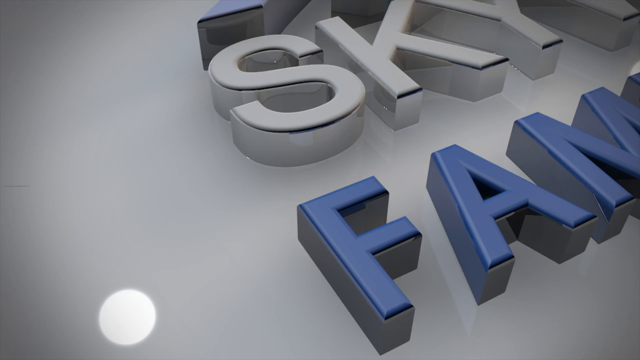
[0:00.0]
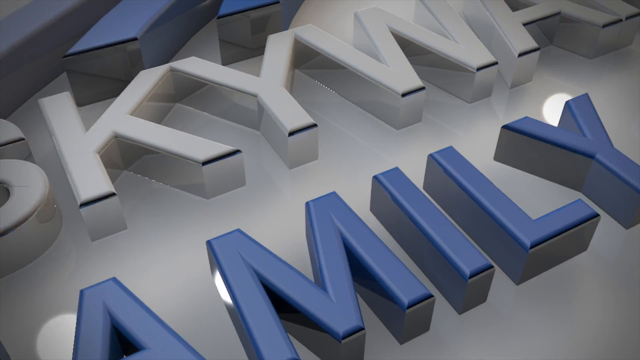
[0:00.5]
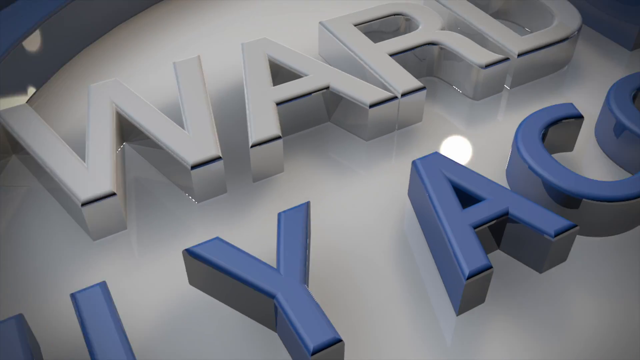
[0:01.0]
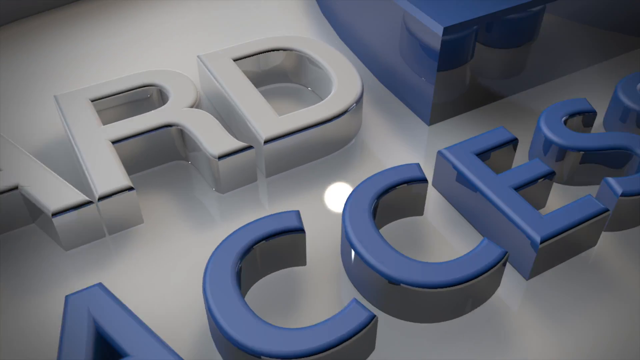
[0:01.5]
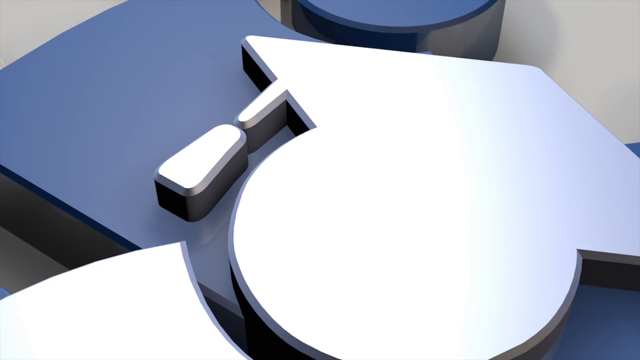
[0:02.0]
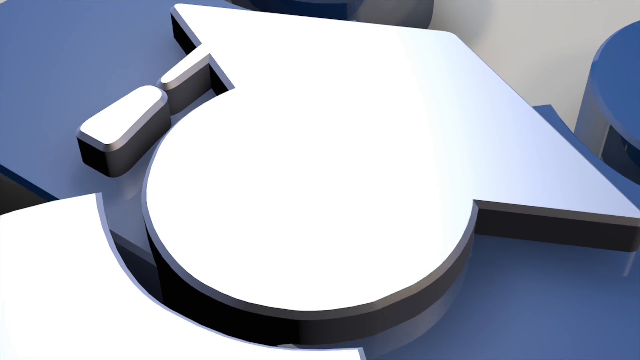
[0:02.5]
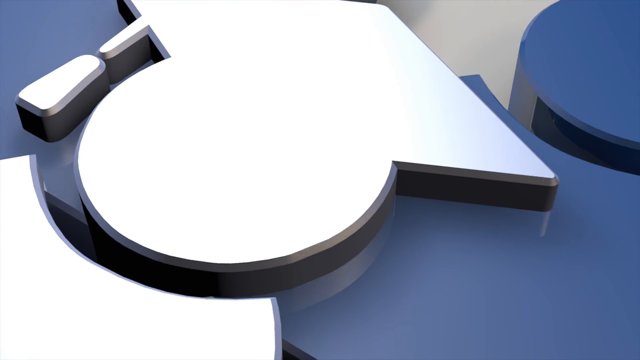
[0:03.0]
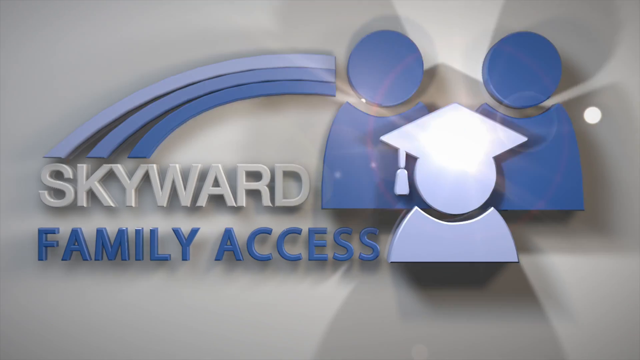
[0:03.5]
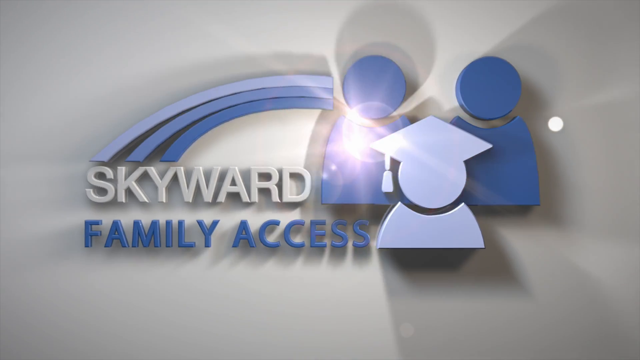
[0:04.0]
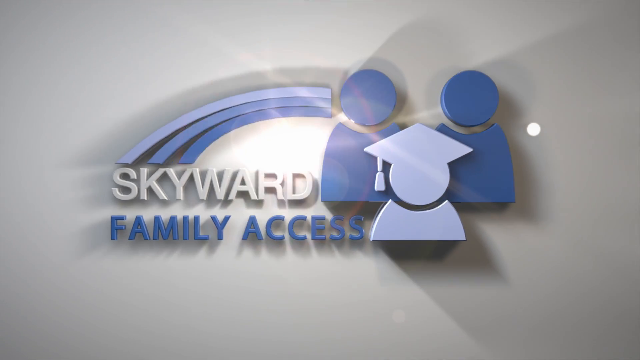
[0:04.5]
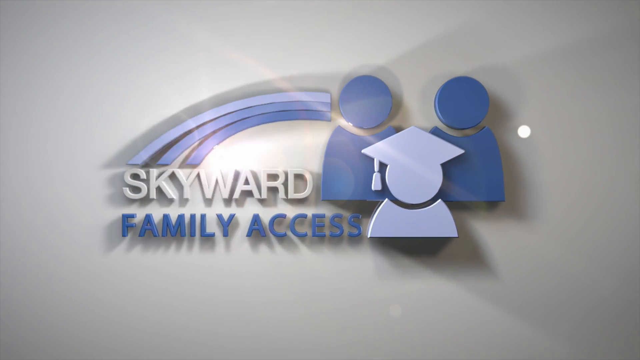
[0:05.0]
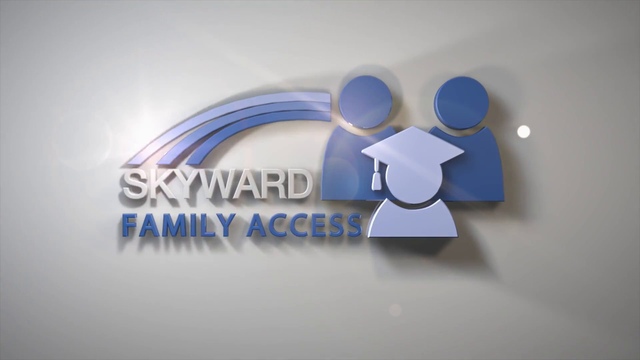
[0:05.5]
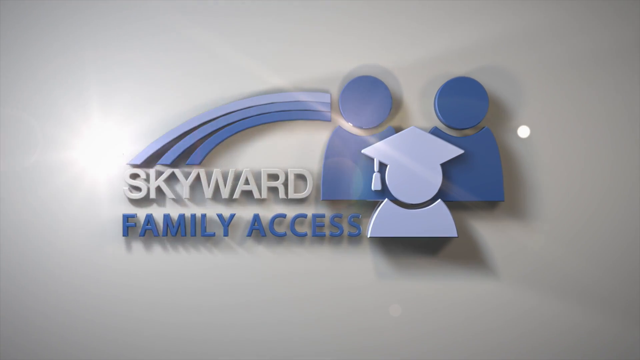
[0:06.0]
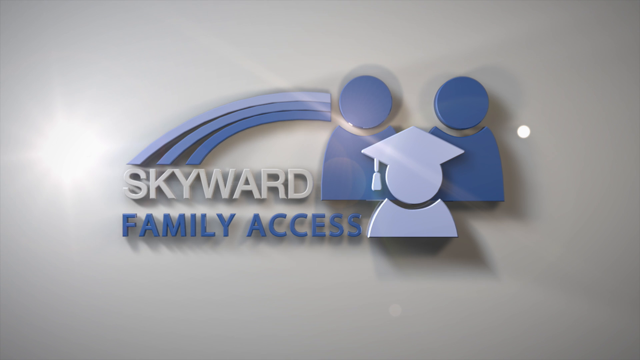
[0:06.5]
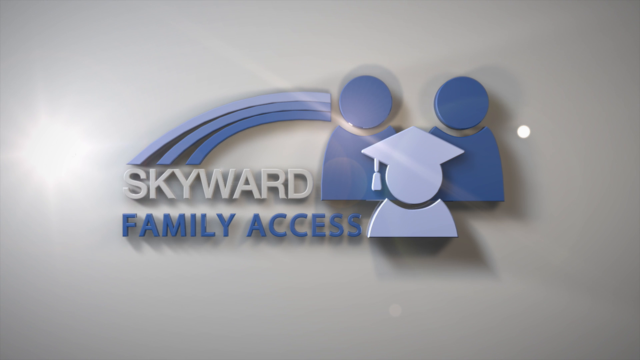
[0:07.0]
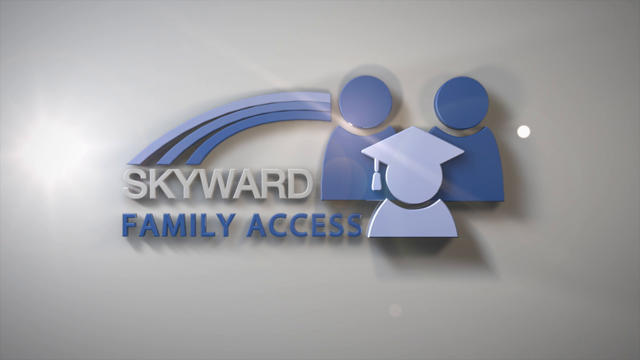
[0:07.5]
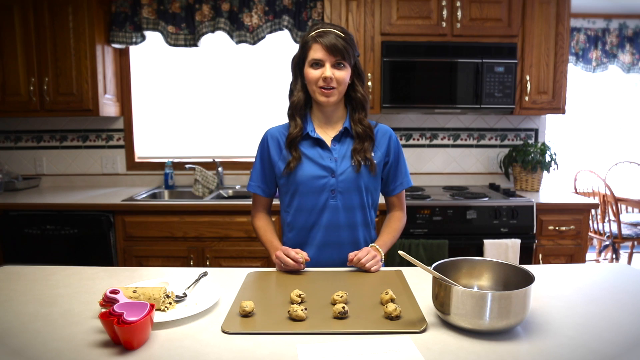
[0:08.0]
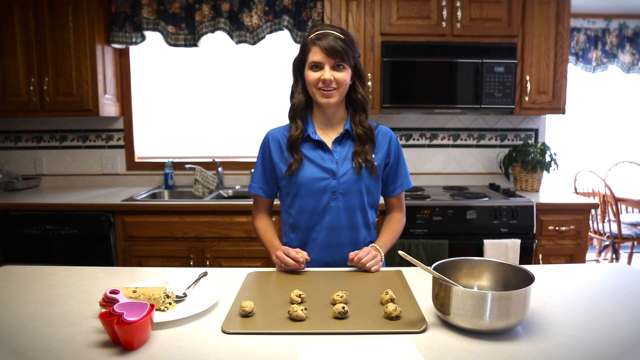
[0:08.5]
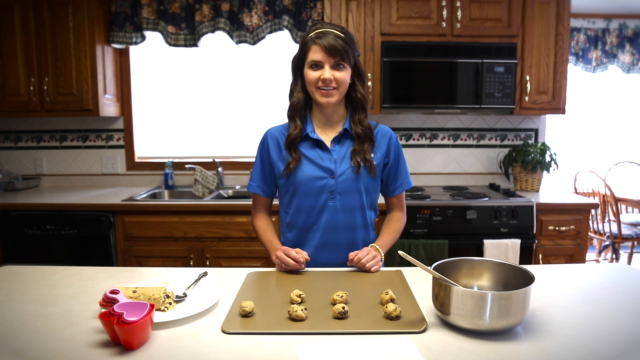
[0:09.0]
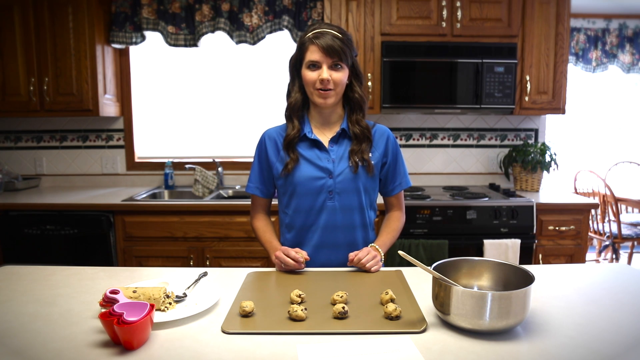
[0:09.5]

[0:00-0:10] The video opens on the Skyward Family Access logo against a white background: a blue shape that appears to be a rainbow, with two blue simulated people standing behind a white simulated person wearing a graduation cap. Something like stars or a bright shiny thing appears in the middle and goes around the logo. The video then transitions to a very country-style kitchen with short blue valances above the windows, brown cabinets, wallpaper, a plant, and a countertop. A woman with long brown hair in a blue shirt stands in front of the countertop with a pile of cookies she is baking, and she is discussing something.